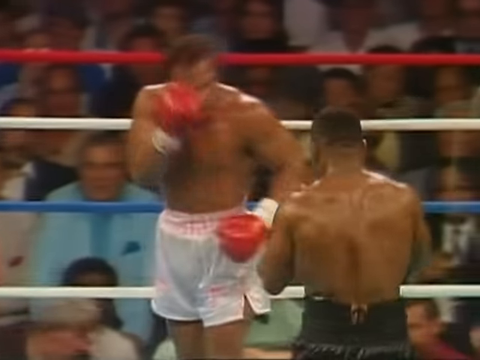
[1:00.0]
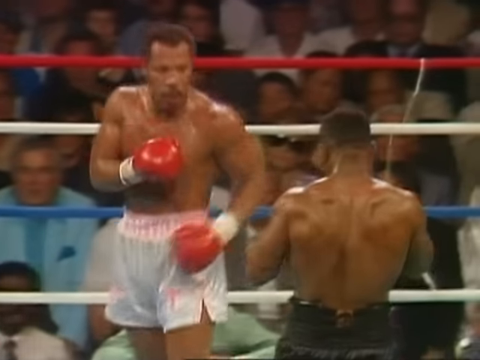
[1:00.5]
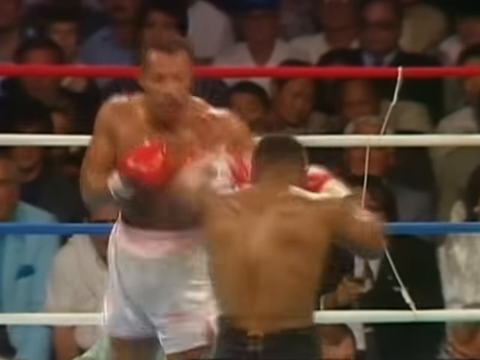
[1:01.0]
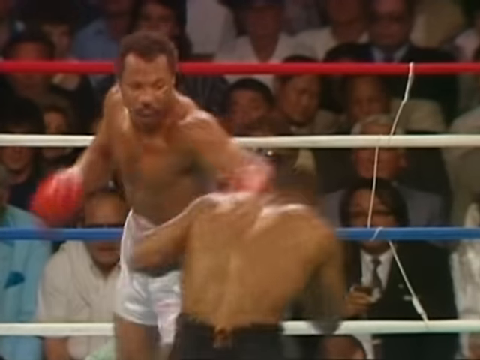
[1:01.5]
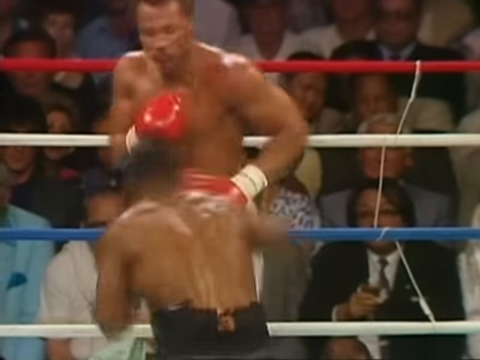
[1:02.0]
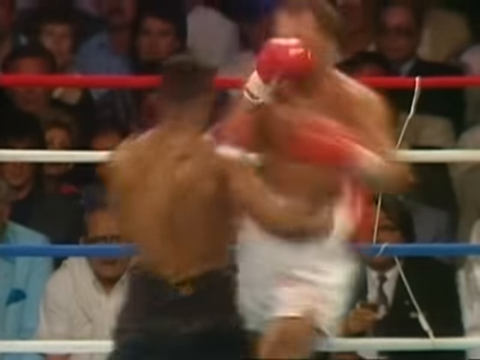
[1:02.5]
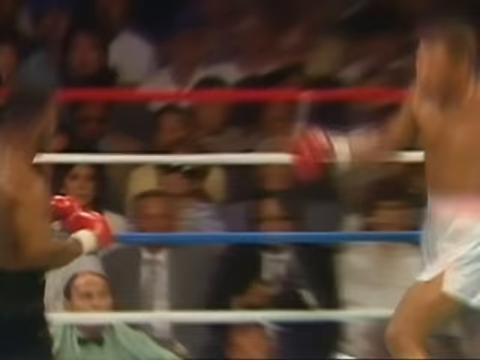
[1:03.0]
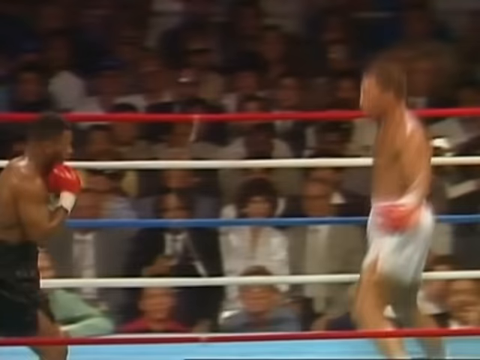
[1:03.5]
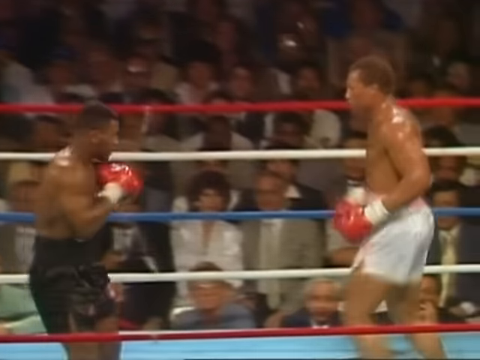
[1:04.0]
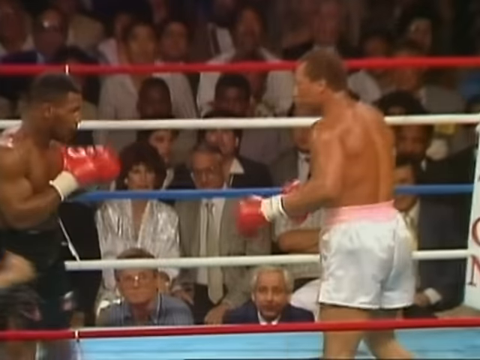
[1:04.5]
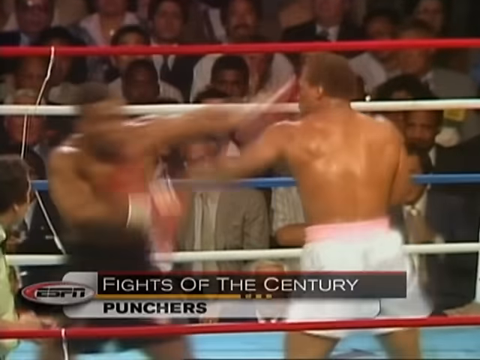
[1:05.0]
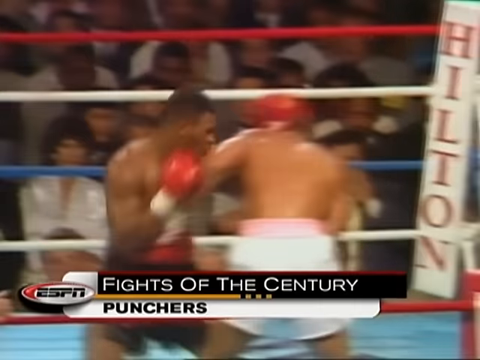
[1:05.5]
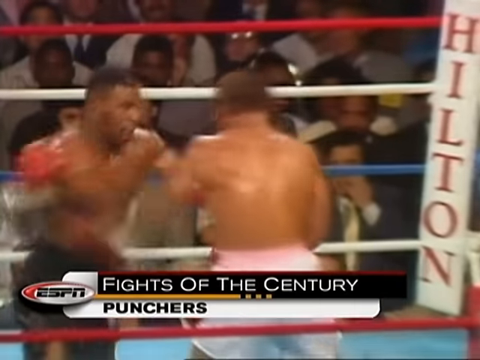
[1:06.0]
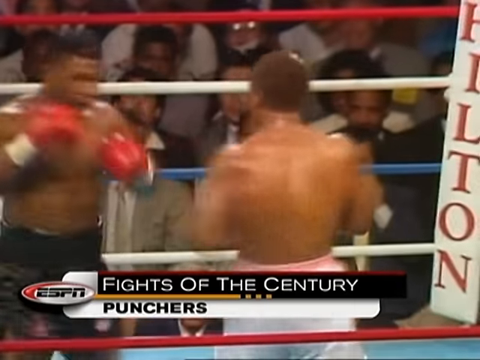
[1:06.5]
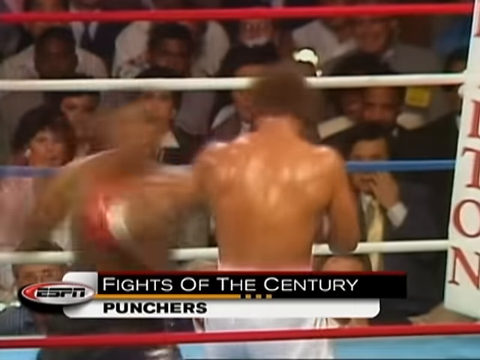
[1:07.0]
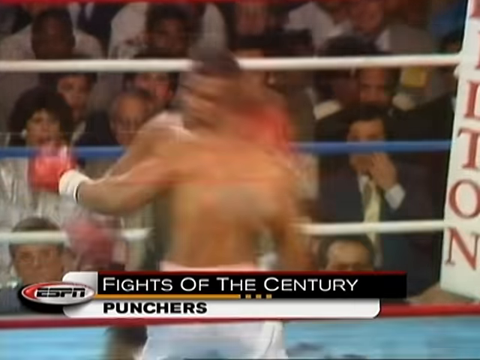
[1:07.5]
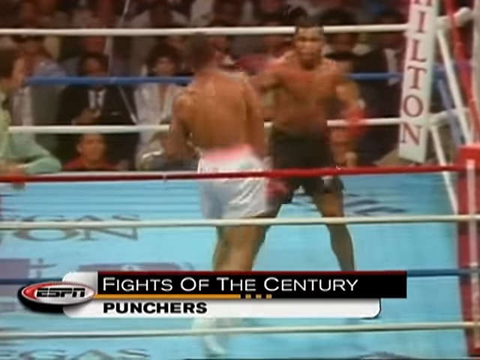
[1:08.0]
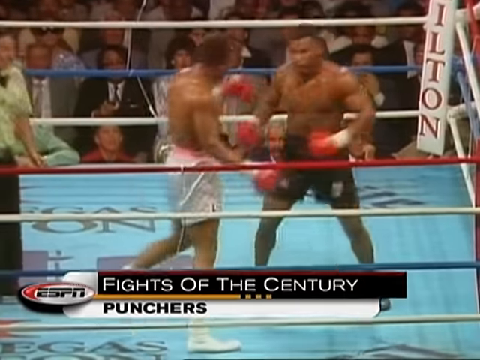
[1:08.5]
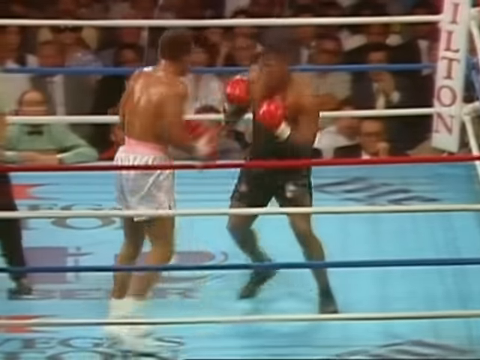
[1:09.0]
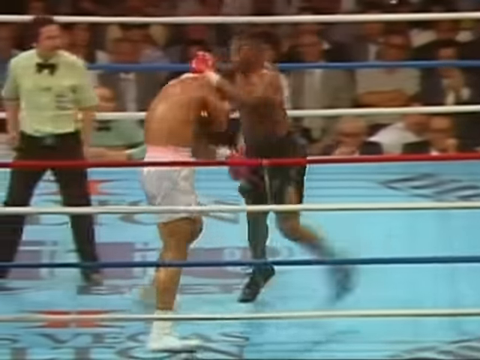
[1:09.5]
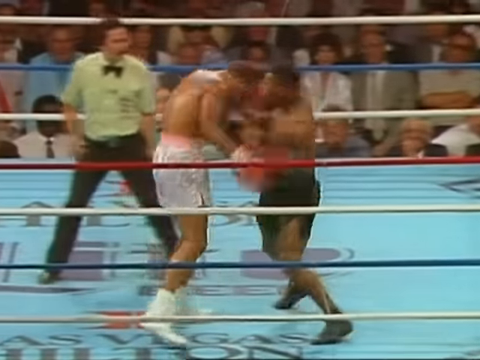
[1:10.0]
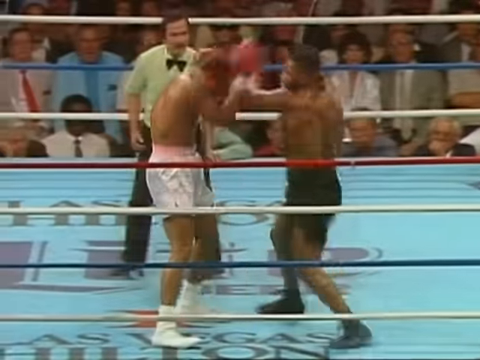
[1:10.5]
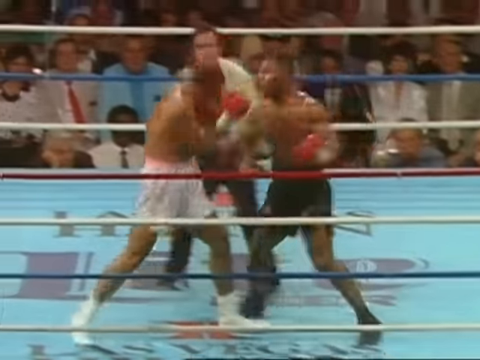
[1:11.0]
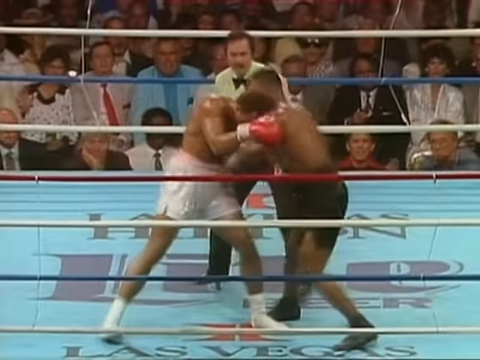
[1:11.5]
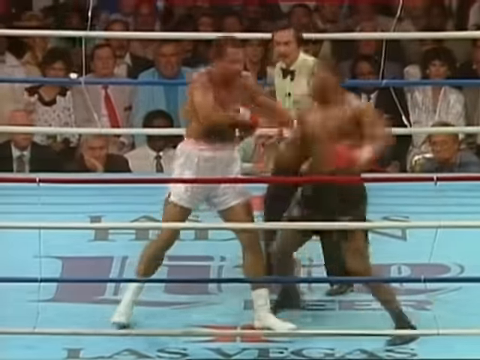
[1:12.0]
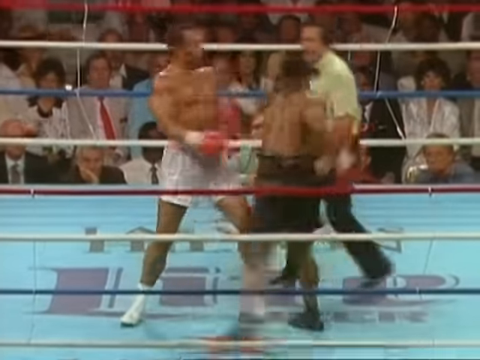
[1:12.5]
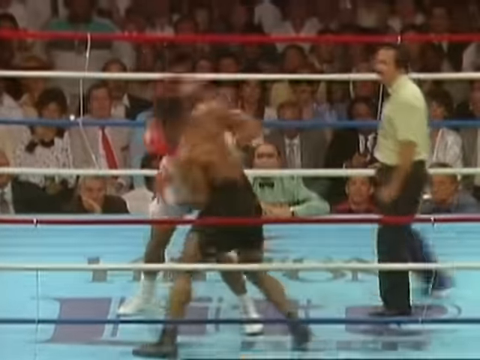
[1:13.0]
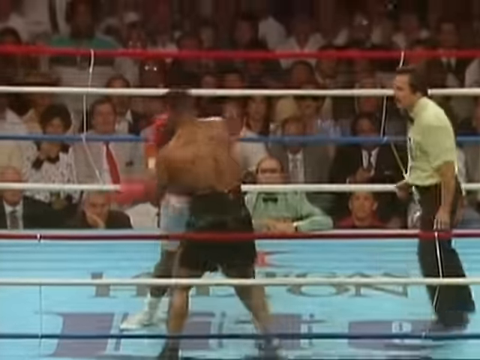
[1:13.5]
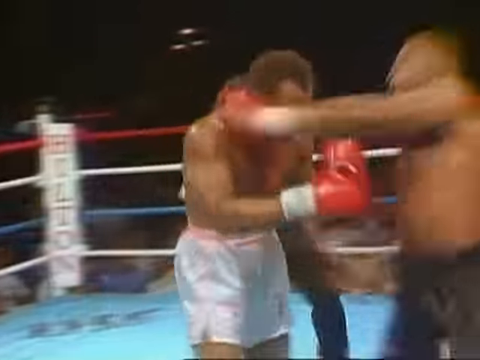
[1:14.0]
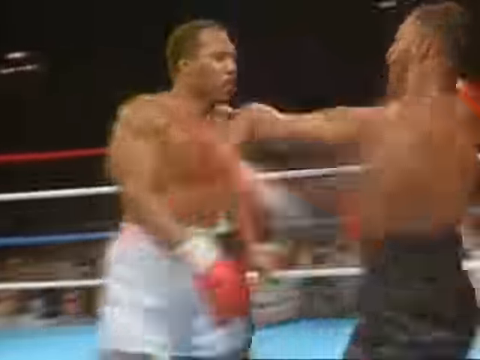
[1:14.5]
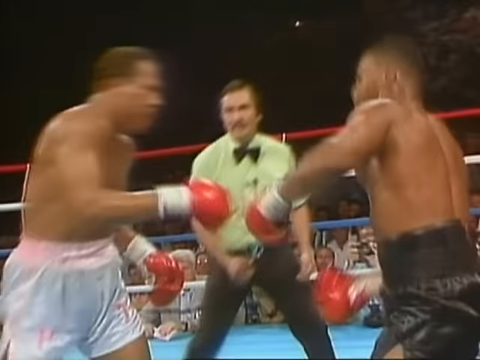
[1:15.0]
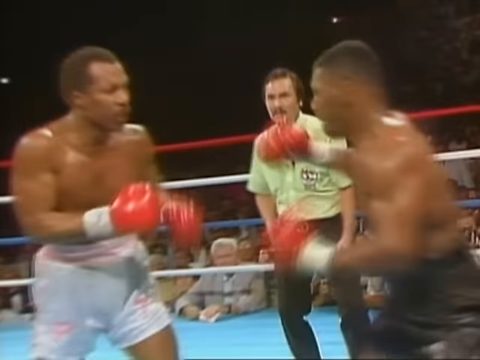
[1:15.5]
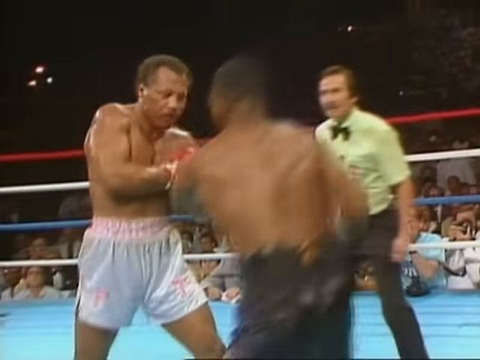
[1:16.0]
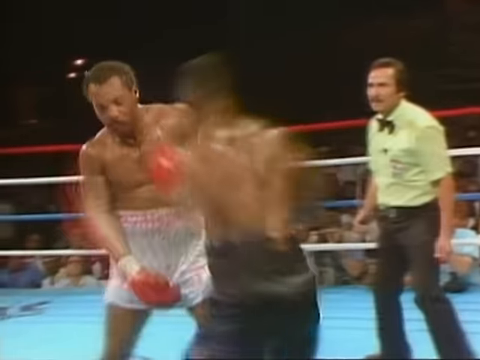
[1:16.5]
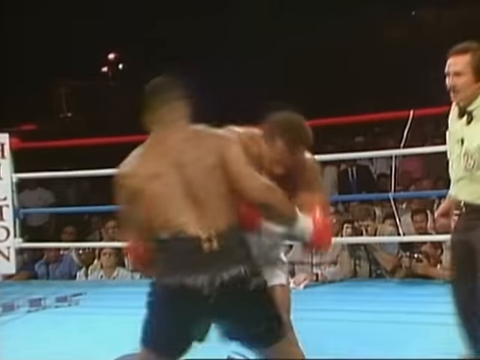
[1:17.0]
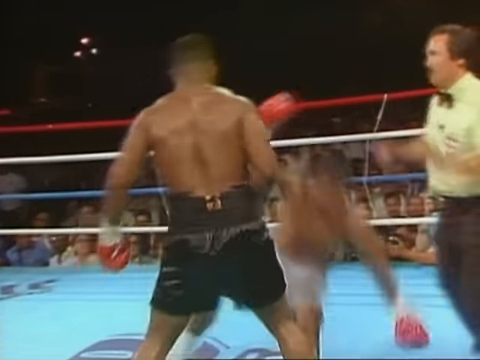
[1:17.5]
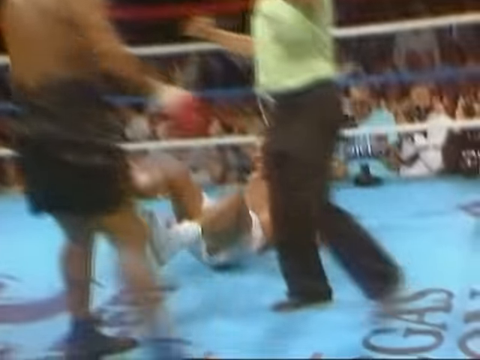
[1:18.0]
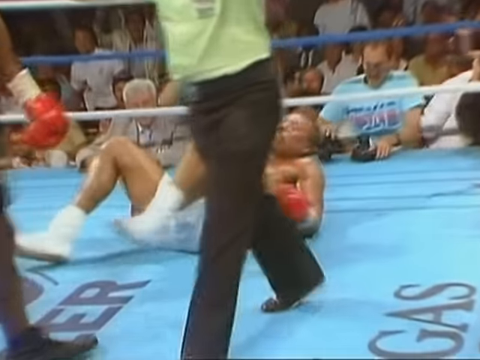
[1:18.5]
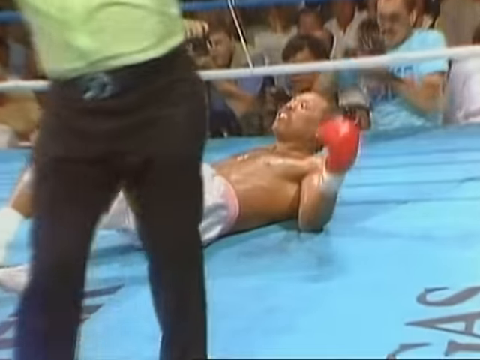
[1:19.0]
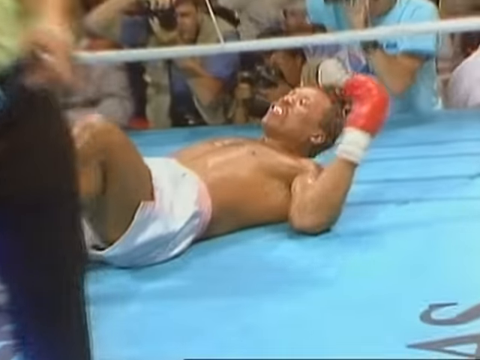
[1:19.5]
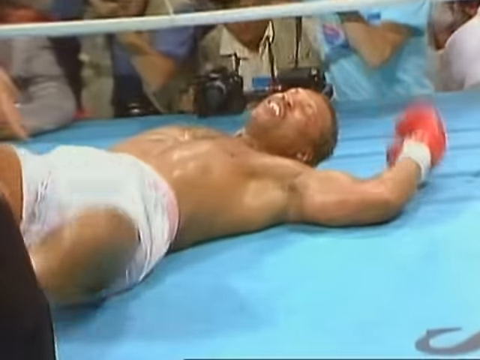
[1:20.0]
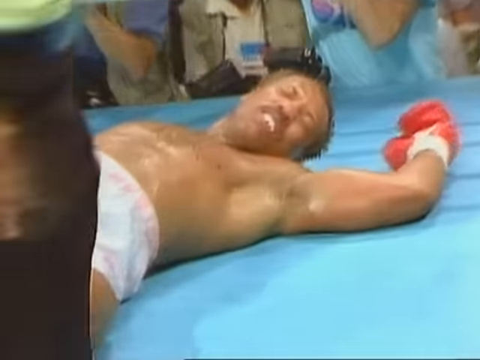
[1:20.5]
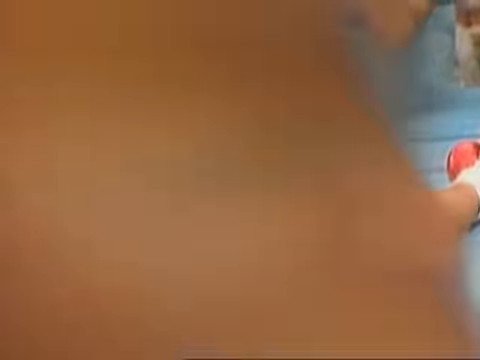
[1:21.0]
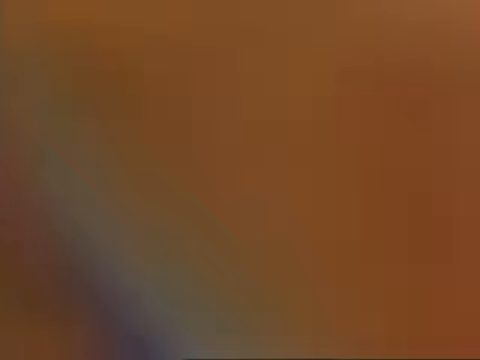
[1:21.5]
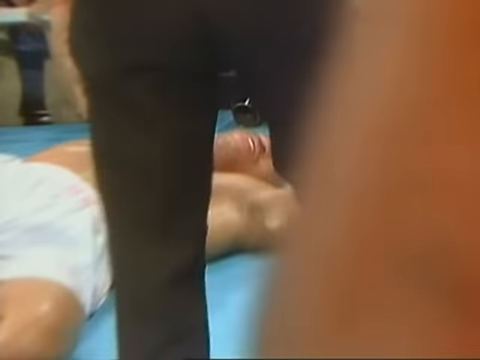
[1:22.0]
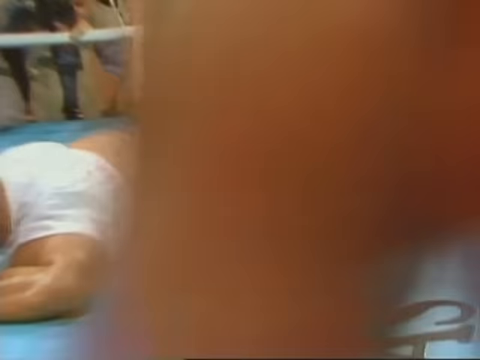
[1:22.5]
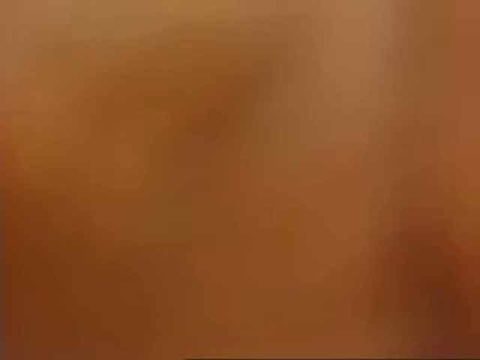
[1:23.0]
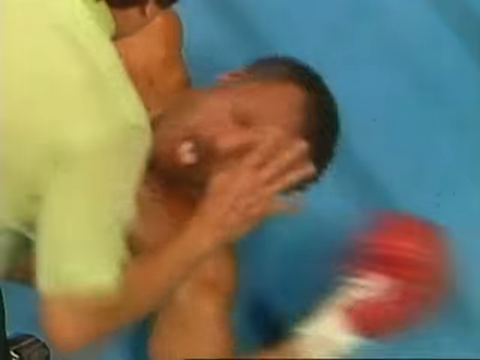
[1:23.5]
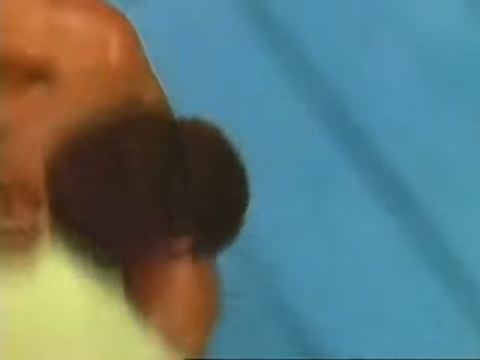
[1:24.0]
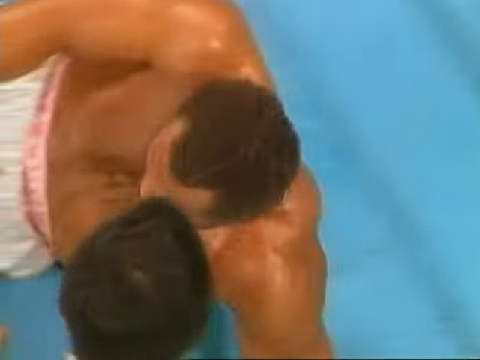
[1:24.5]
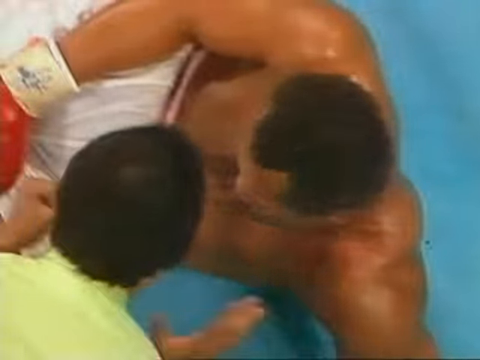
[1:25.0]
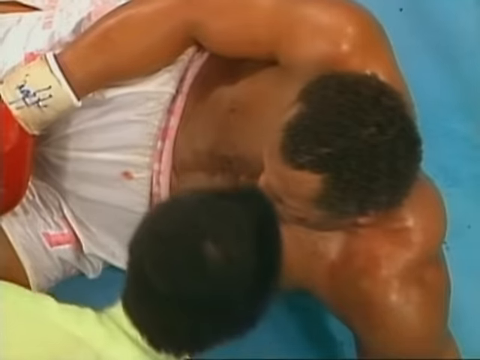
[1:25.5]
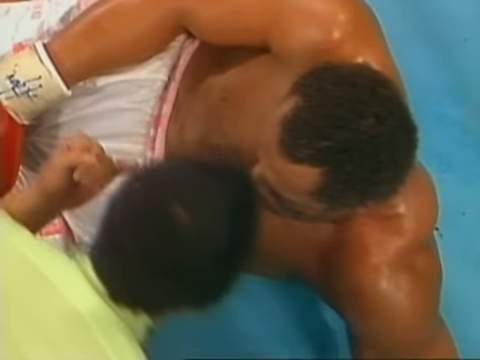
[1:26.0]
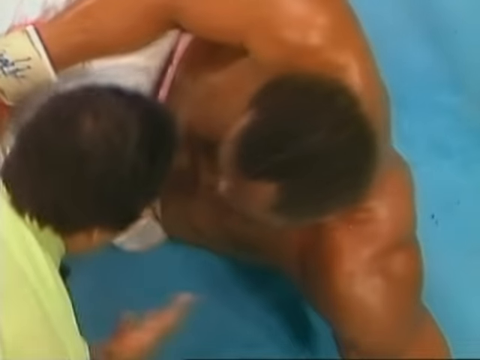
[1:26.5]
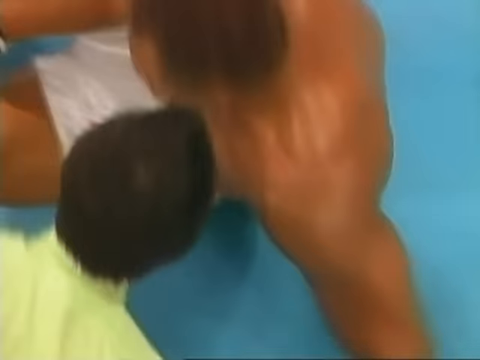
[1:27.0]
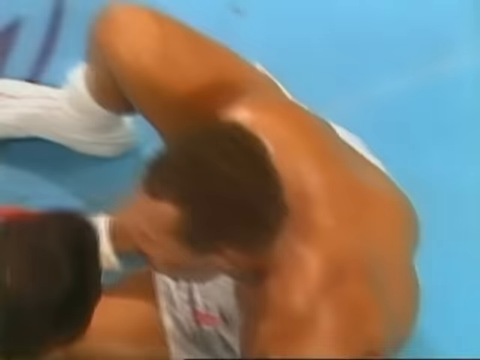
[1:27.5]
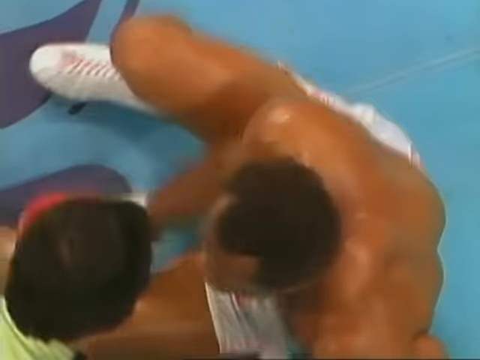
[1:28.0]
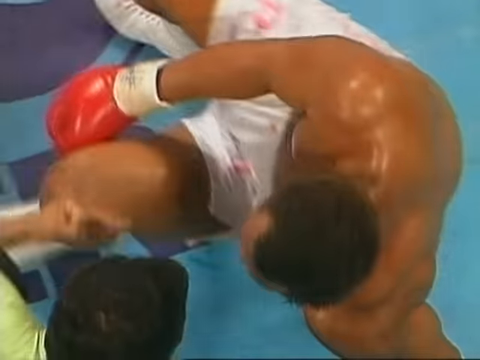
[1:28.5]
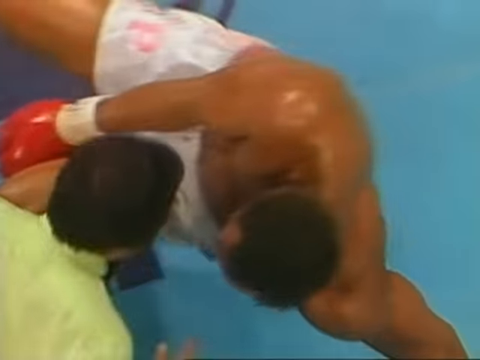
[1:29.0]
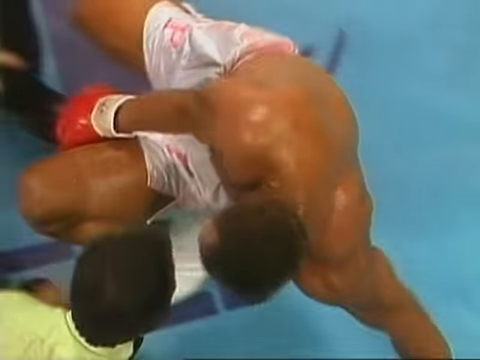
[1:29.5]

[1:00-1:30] In the center of the ring, the camera faces Tyson's back while the other boxer faces directly toward the camera. The boxer in white trunks has his right hand down by his hip and his left hand up by his chest; Tyson appears to have both hands up by his chest. A couple of punches are thrown, then Tyson lands a hard left hook that makes the boxer in white trunks stumble back. He catches himself and jumps up and down to get his bearings. Tyson comes in again with a left and a right; the boxer in white trunks tries a weak left jab that doesn't really land. Tyson lands another hard right, then a right, a left, an uppercut, an uppercut, another left and another right, landing a series of punches until the boxer in white trunks goes down. The referee comes in and tells Tyson to go to the corner. The camera zooms in on the boxer on the mat: his eyes are closed and his head is barely up, then his head rests on the mat. The referee starts counting him down as he tries to get up.